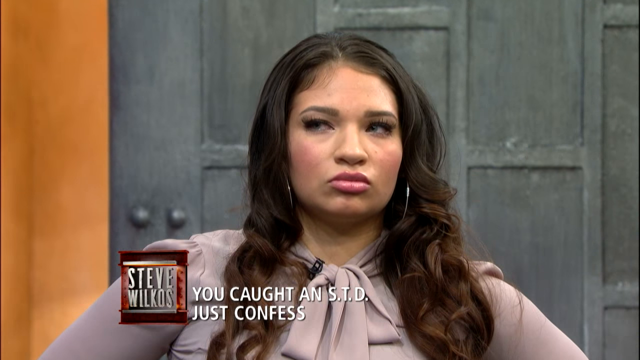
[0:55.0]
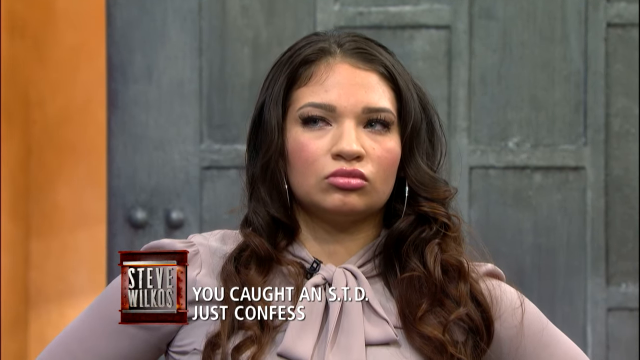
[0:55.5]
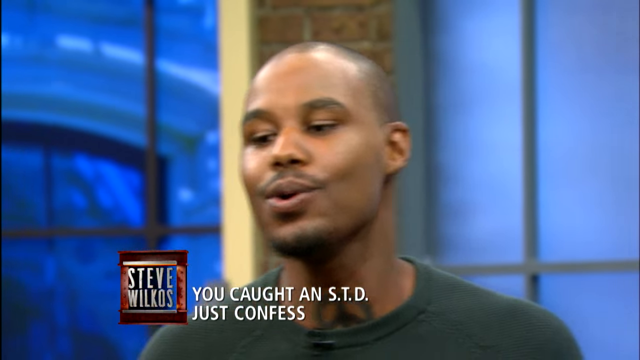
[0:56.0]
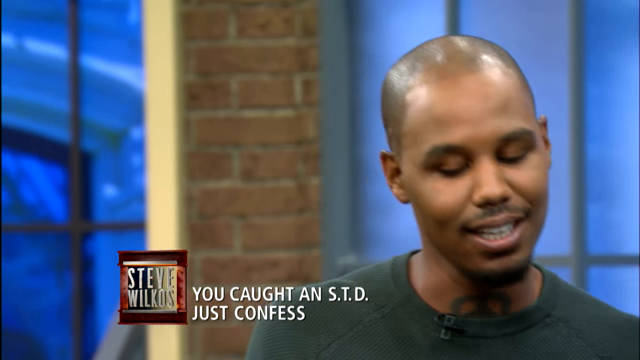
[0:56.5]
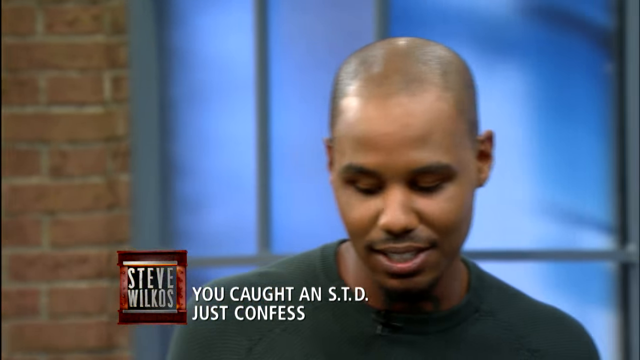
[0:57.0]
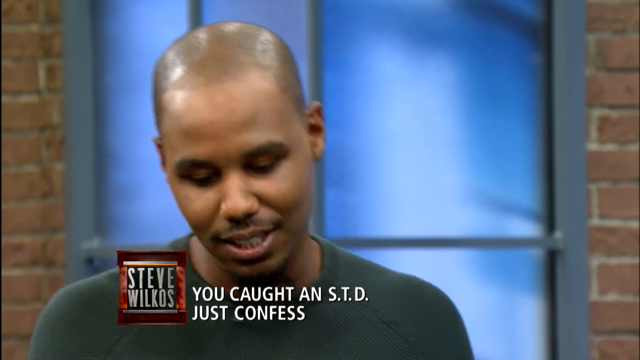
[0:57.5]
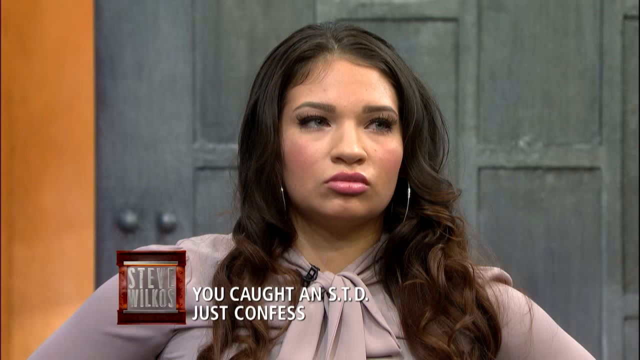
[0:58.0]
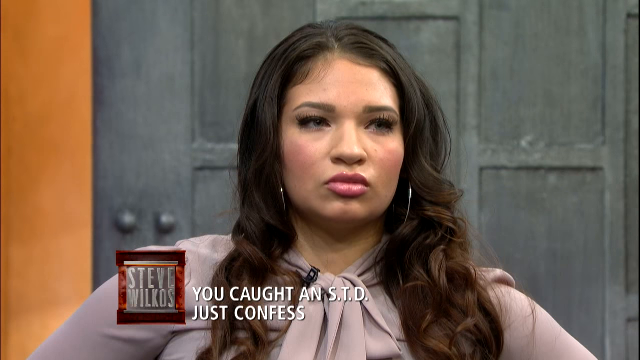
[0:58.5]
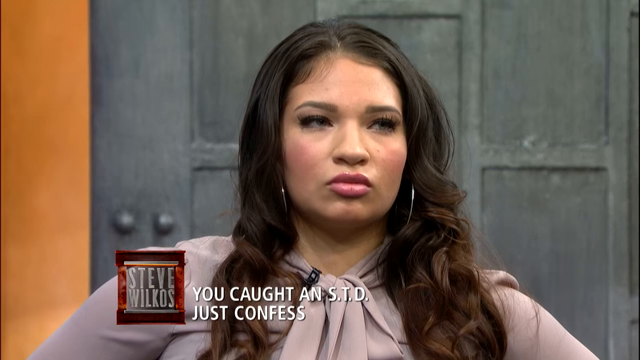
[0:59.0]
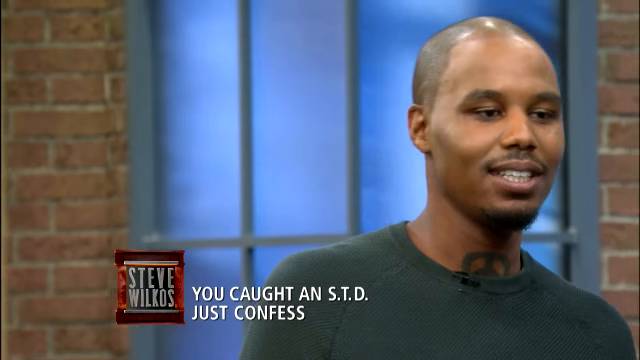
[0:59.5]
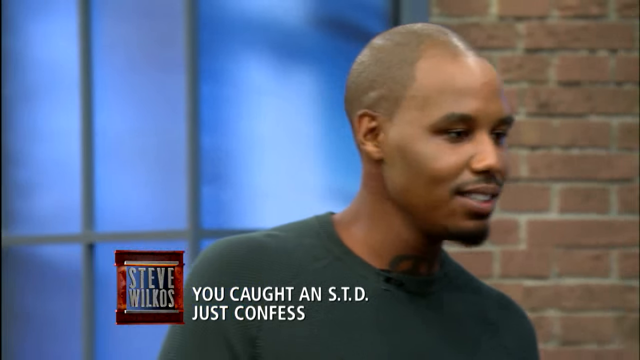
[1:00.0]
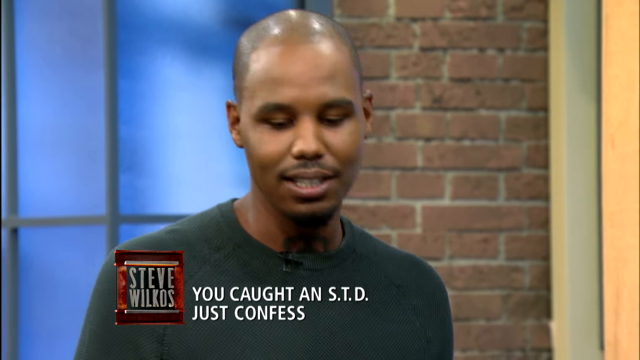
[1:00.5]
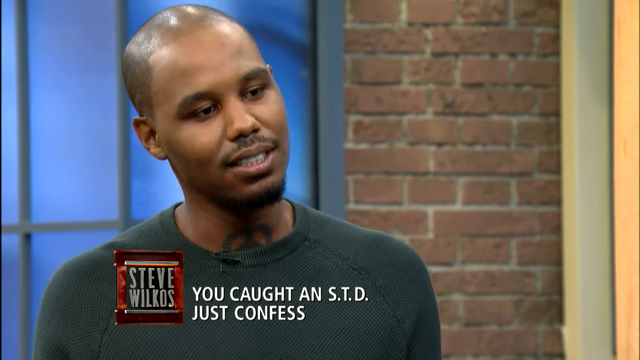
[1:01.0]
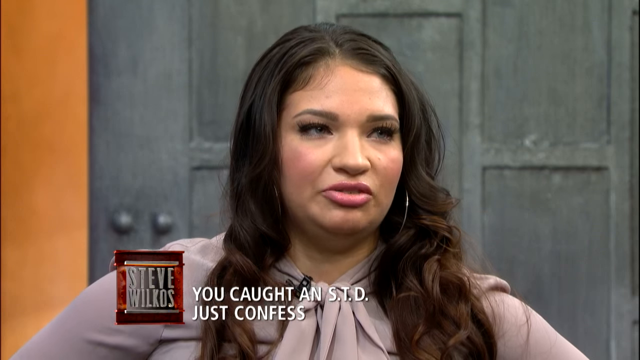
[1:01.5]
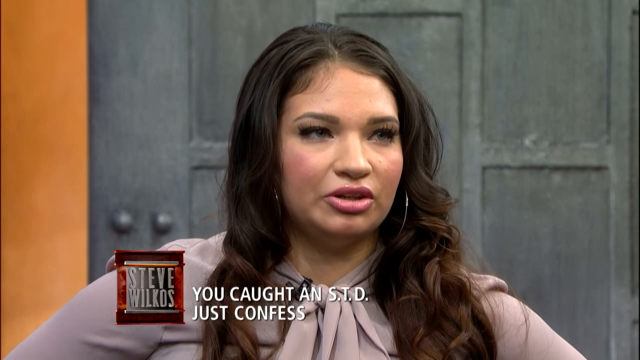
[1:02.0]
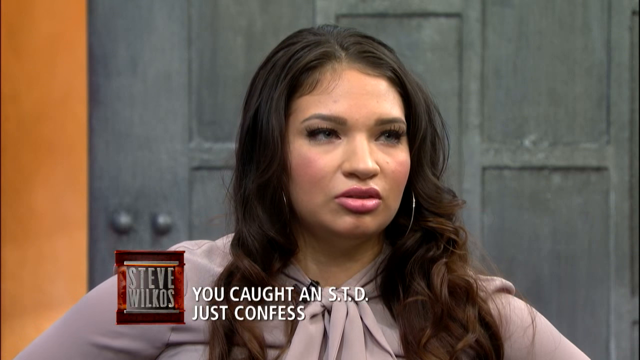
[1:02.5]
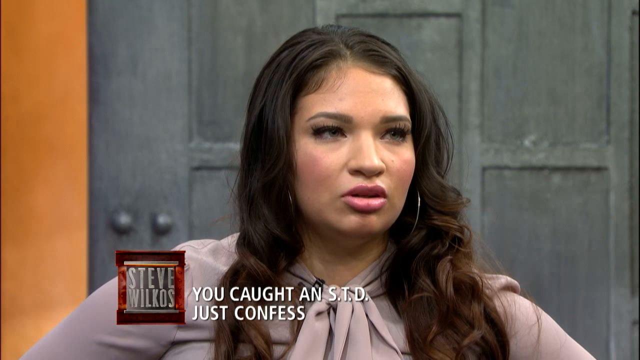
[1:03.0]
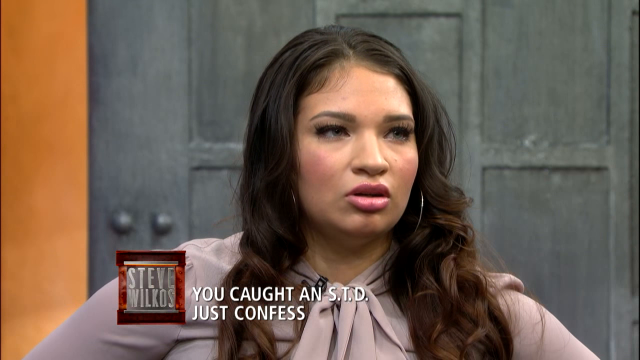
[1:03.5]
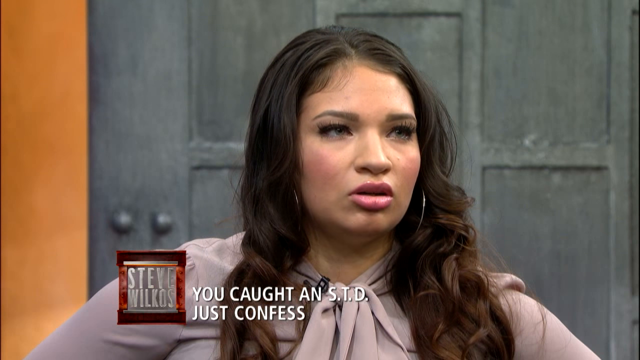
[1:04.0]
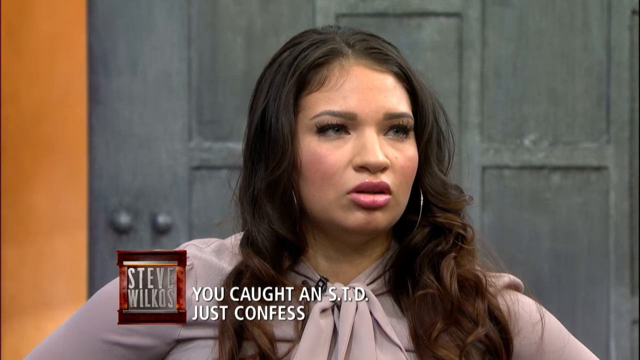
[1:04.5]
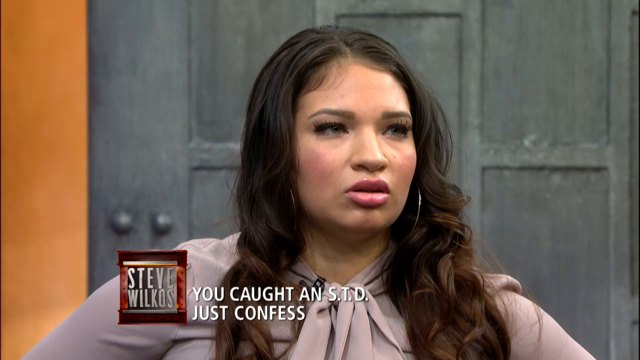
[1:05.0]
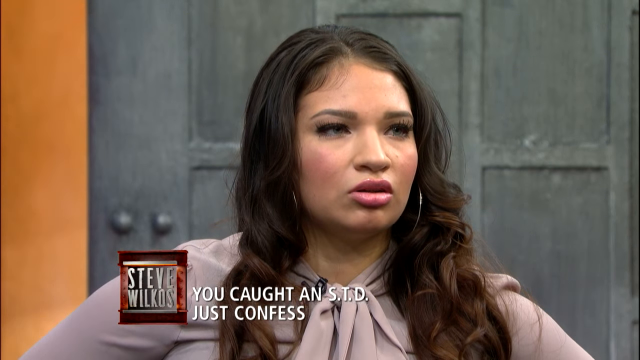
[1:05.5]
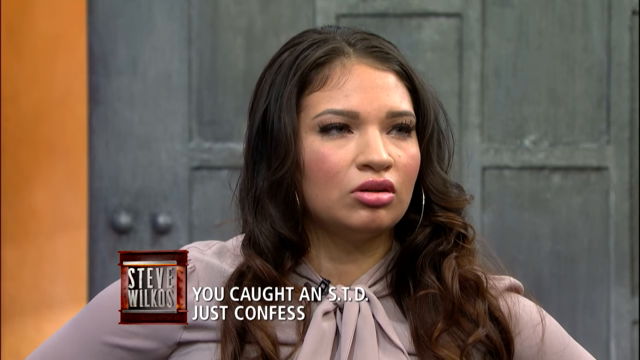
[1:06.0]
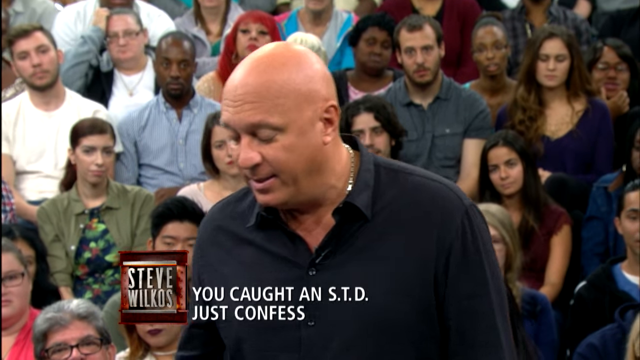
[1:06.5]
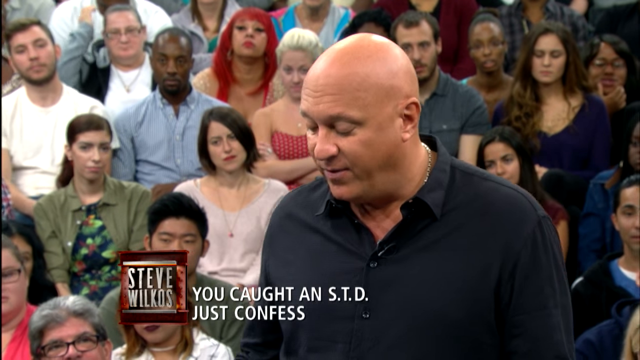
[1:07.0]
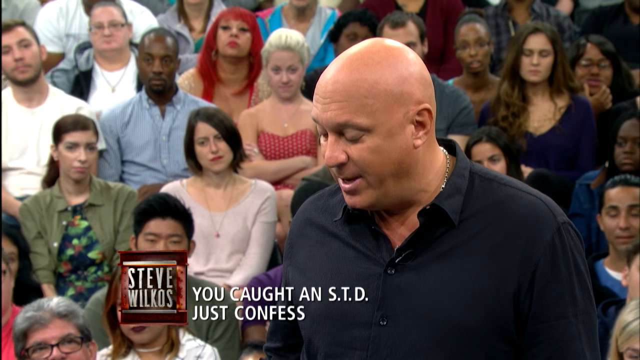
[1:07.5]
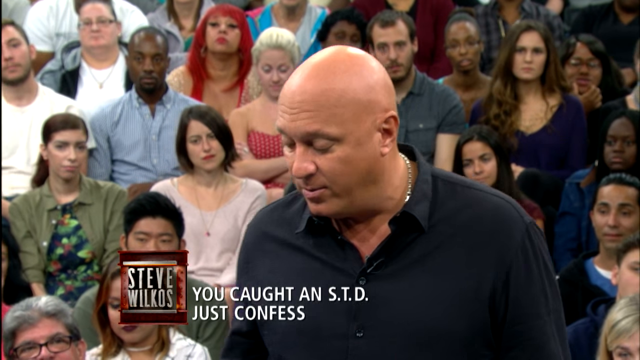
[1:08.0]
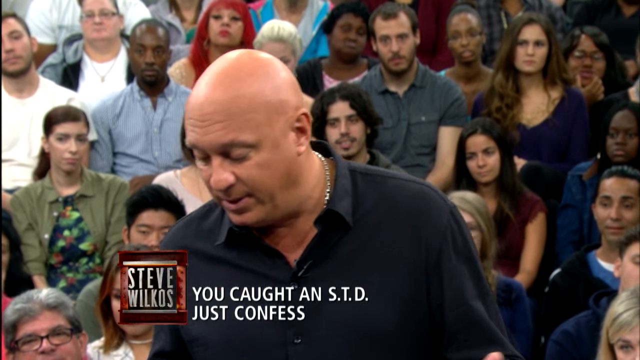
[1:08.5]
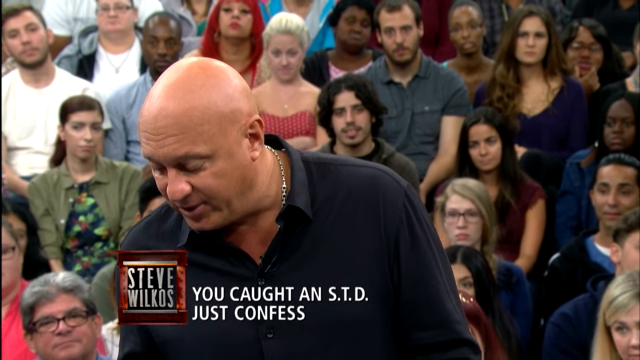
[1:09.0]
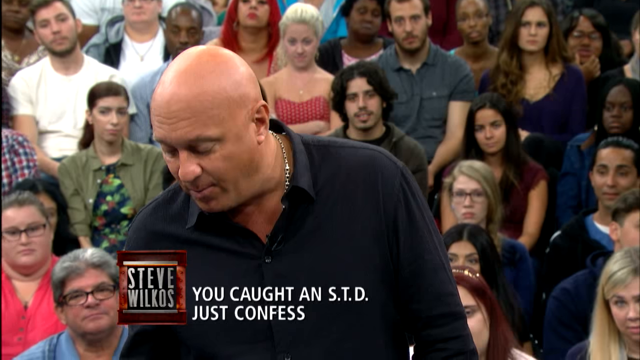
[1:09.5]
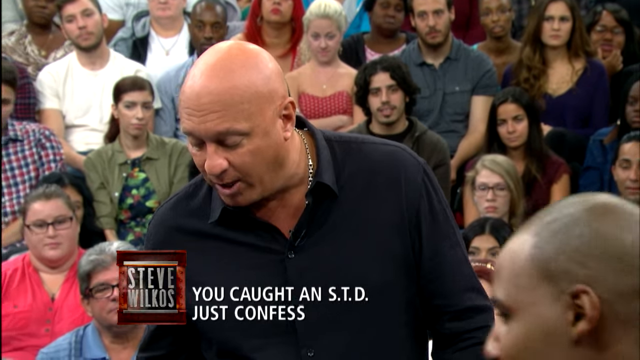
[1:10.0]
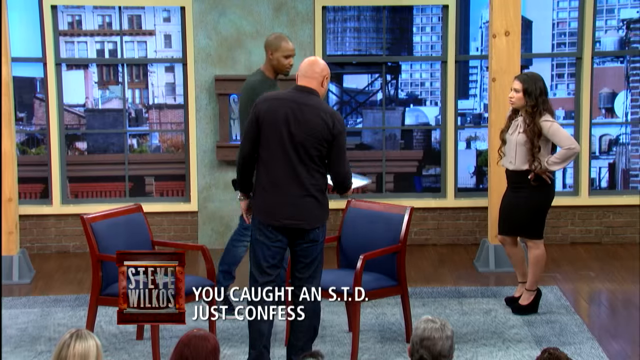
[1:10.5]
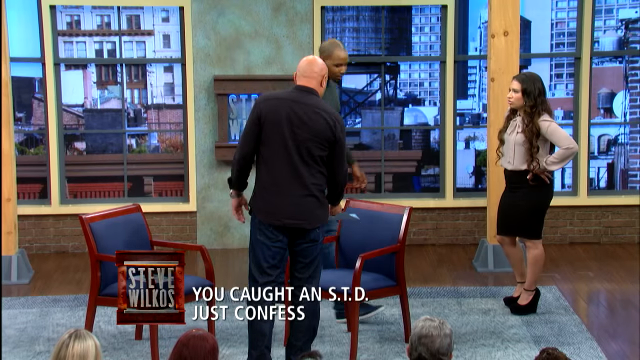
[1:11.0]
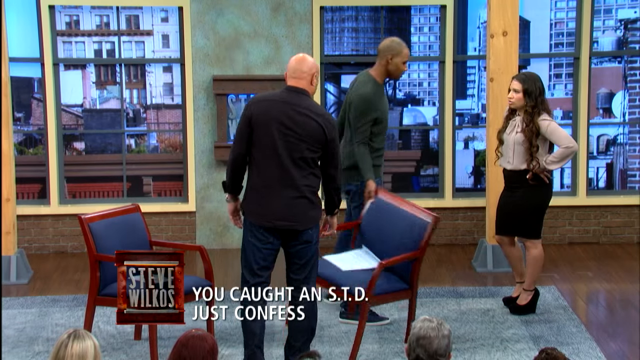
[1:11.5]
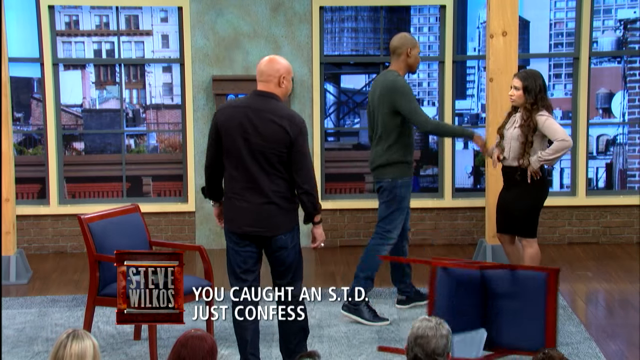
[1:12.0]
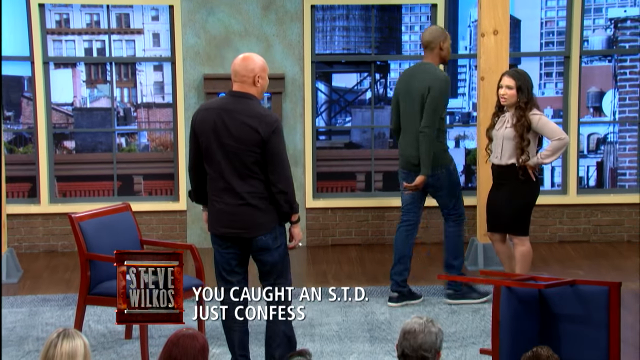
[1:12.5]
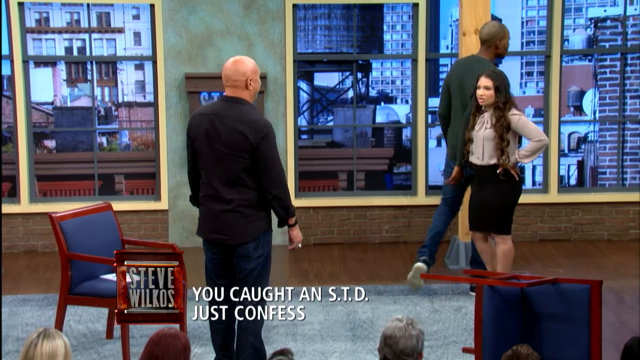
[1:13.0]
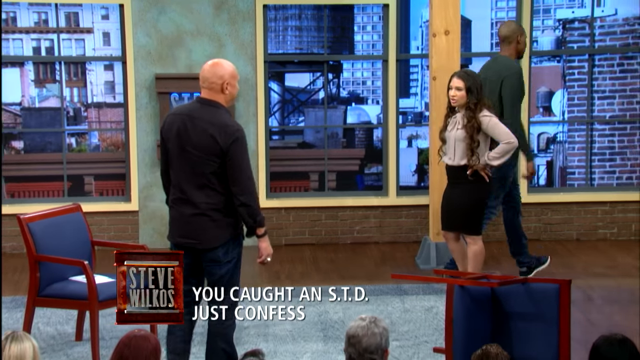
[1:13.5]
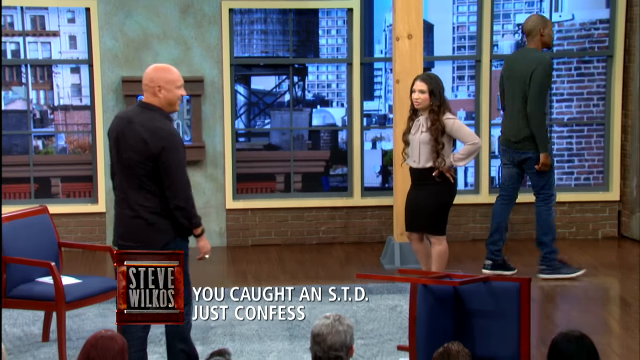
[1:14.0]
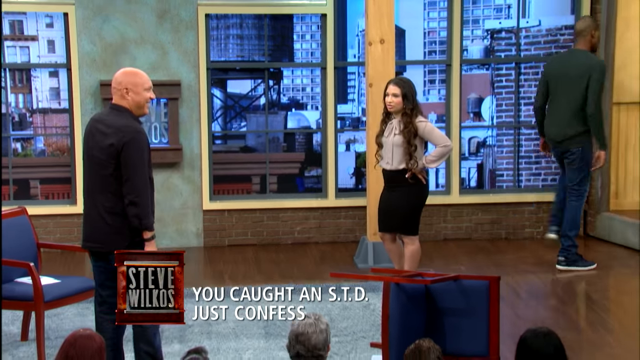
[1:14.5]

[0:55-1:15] The video switches to the man as he talks; he is looking down and shaking his head, and he has a shaved head. He seems to be addressing the woman directly, and she responds for the first time, saying something very quickly, then looks toward him for a while. The video returns to the host as he reads. Then comes the first wide shot of the set: the host is standing toward the front of the stage, the two guests are farther back, and two chairs are in front of the host. The young man walks toward the woman, who is on the right side, and knocks over the chair closest to her with his hand. The woman is wearing a pencil skirt and heels, and the young man is wearing jeans. After knocking over the chair, he walks off the stage.